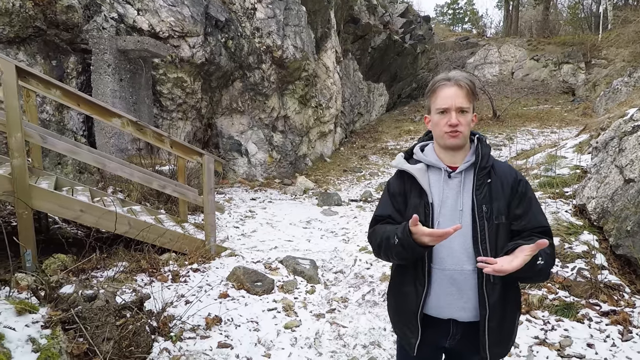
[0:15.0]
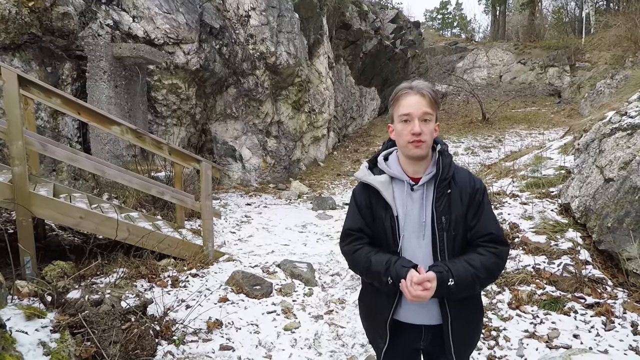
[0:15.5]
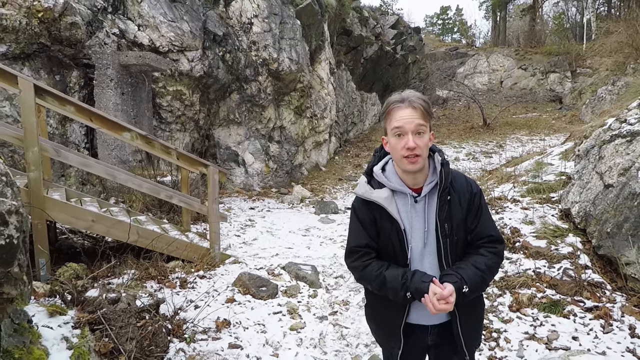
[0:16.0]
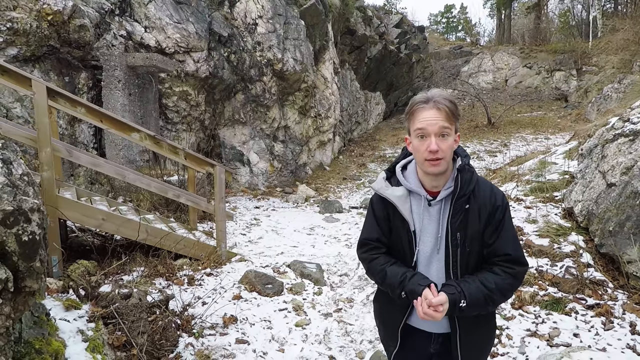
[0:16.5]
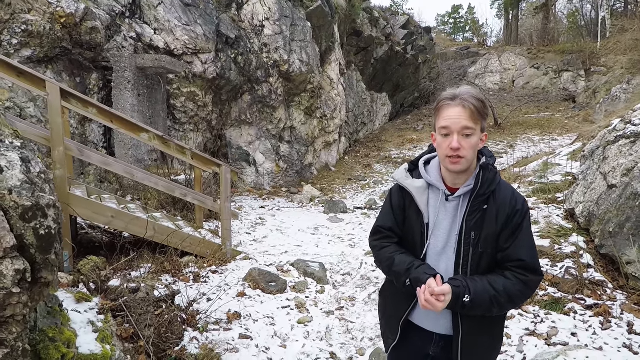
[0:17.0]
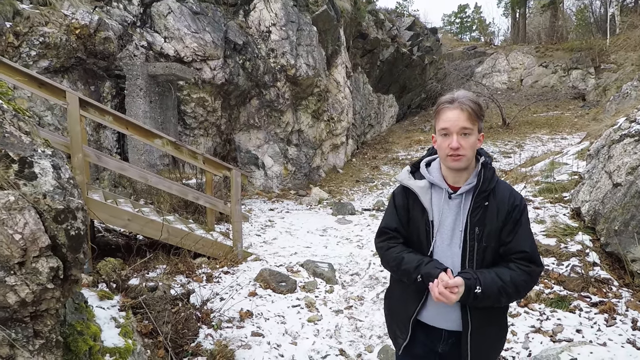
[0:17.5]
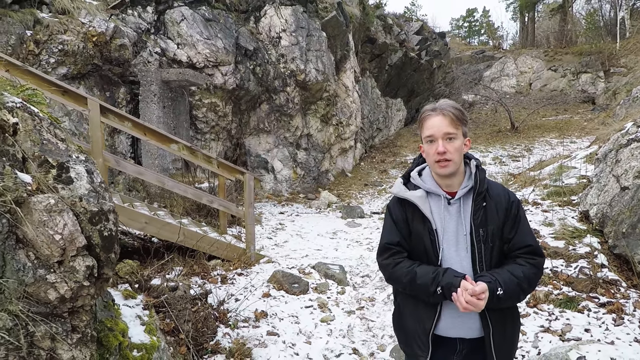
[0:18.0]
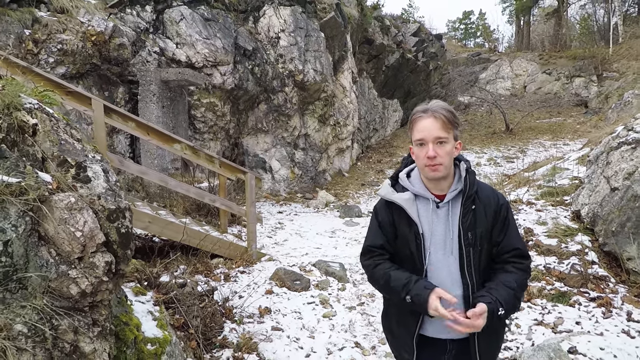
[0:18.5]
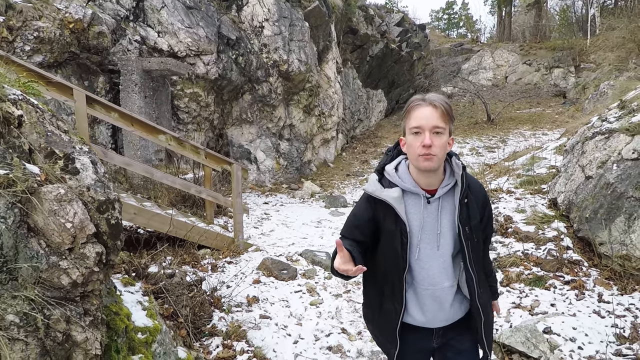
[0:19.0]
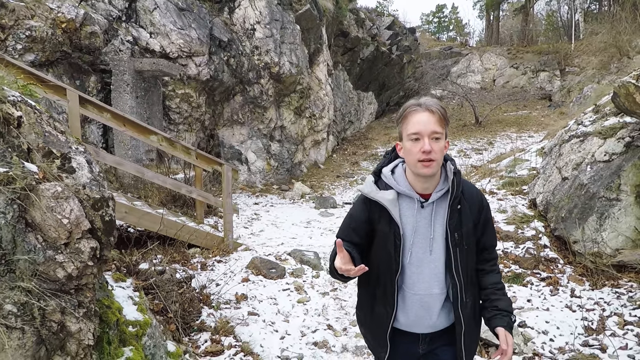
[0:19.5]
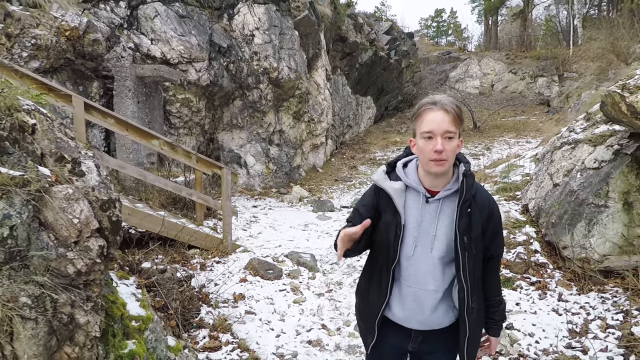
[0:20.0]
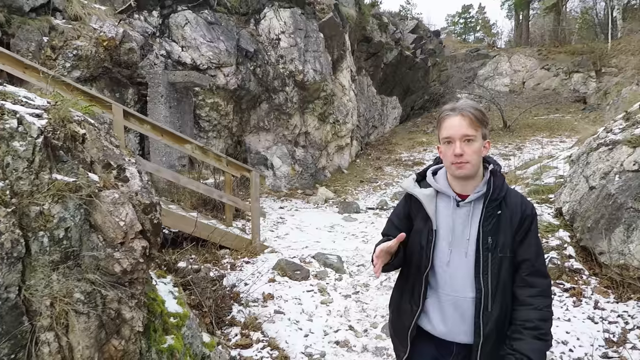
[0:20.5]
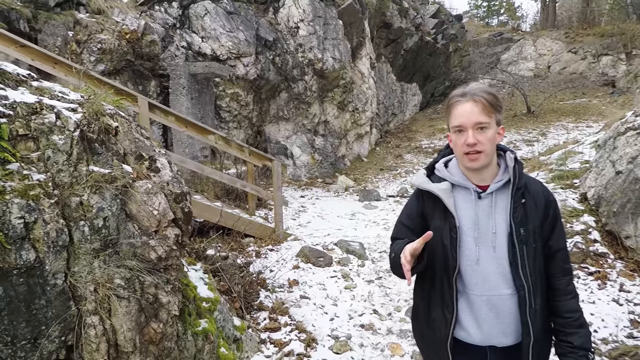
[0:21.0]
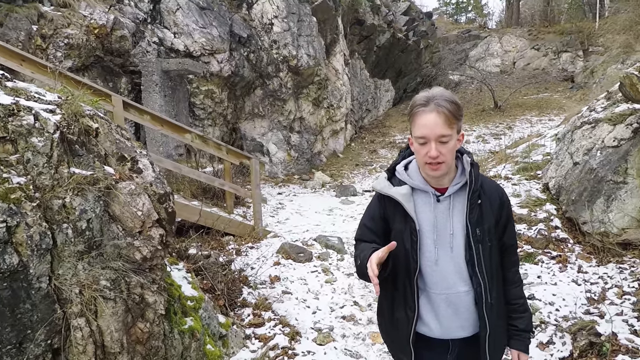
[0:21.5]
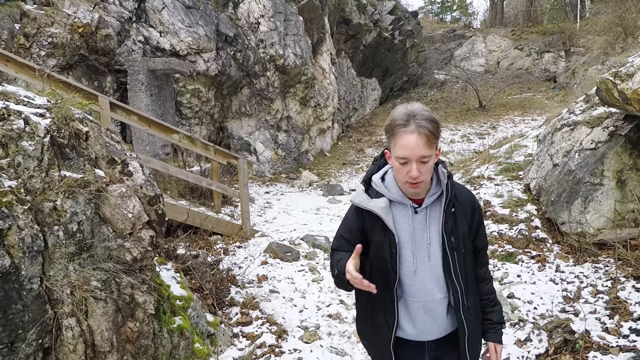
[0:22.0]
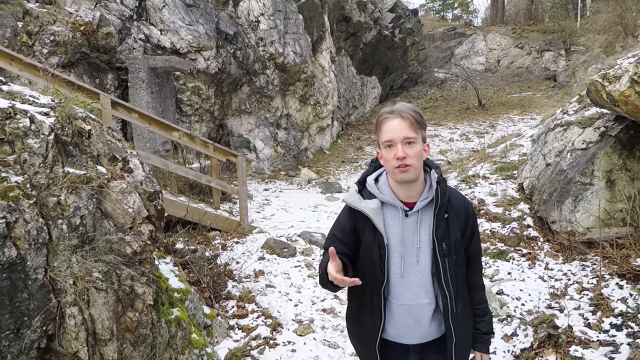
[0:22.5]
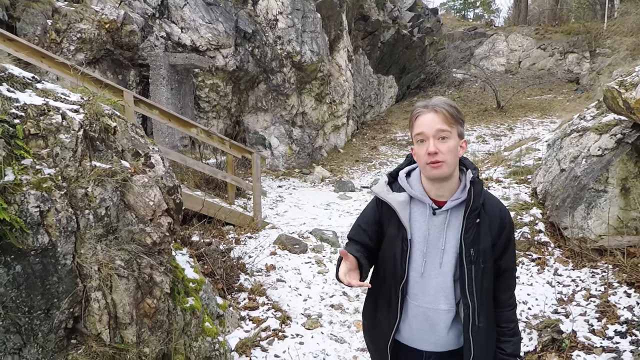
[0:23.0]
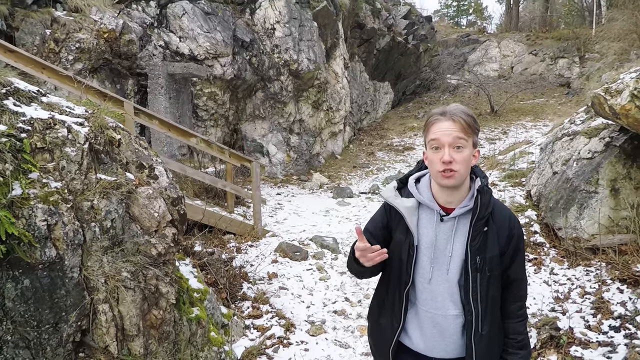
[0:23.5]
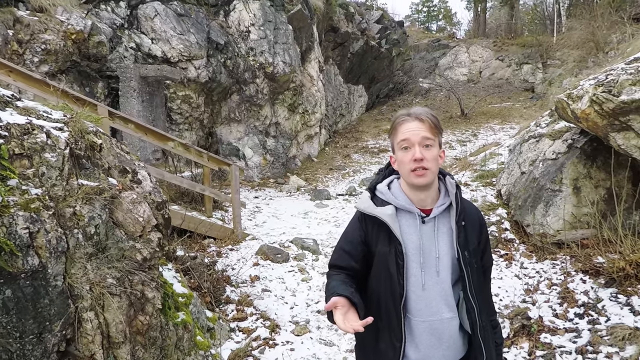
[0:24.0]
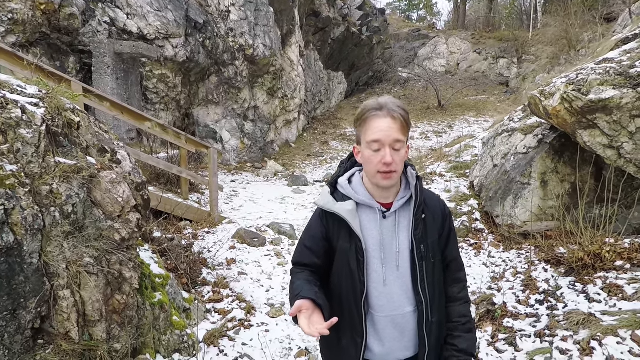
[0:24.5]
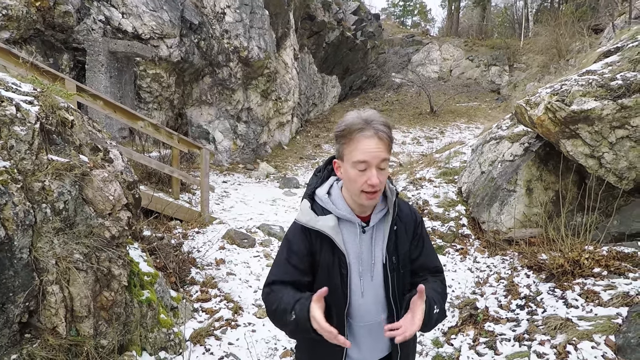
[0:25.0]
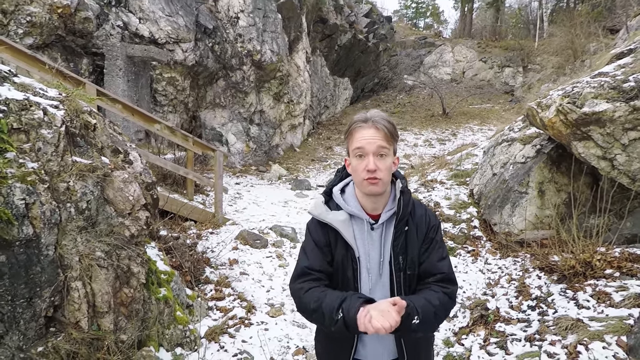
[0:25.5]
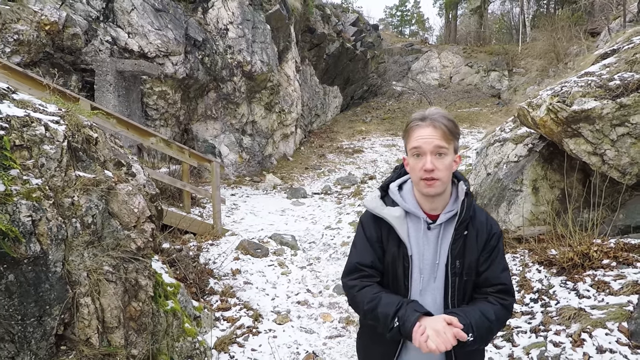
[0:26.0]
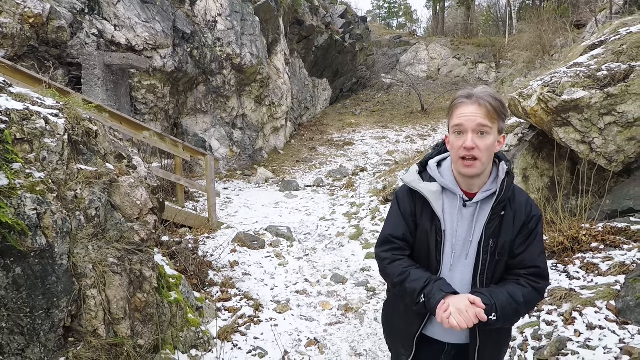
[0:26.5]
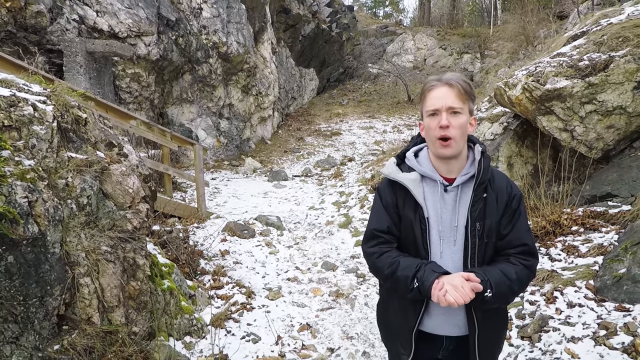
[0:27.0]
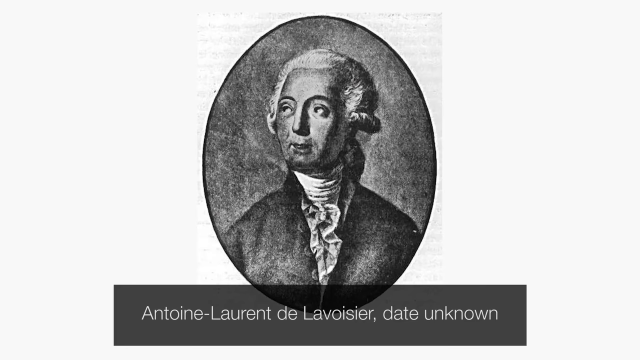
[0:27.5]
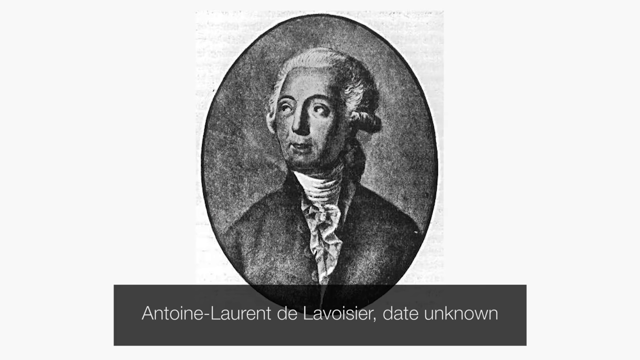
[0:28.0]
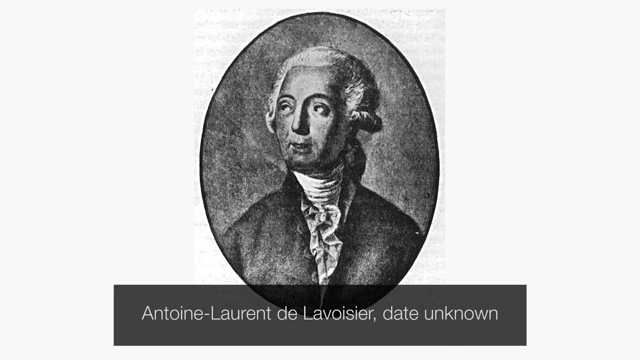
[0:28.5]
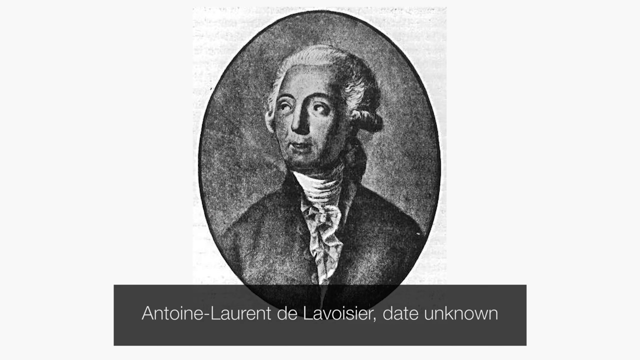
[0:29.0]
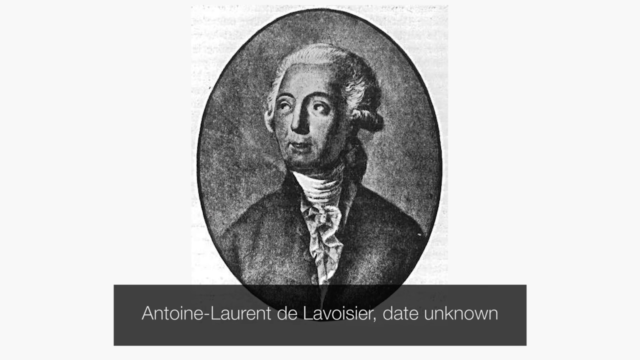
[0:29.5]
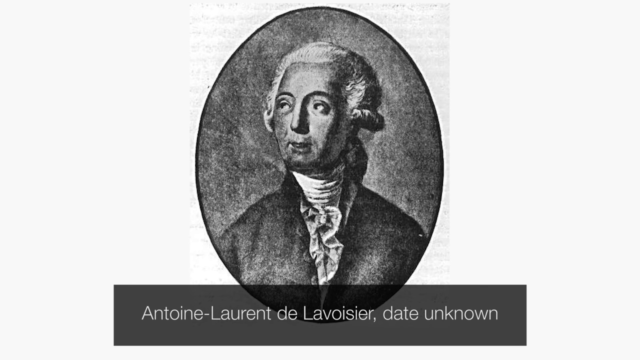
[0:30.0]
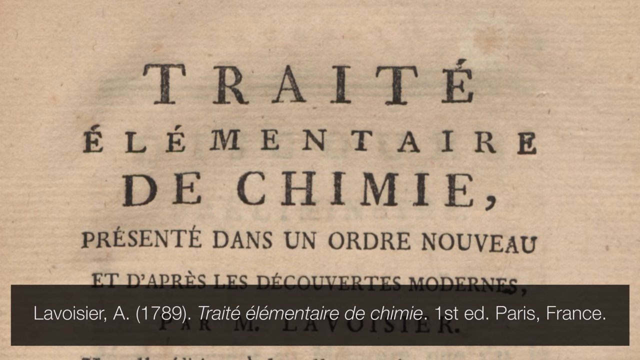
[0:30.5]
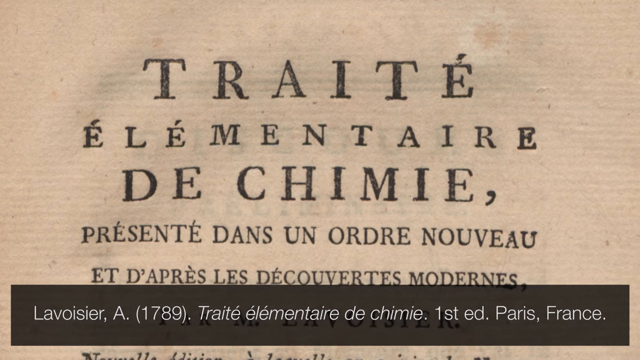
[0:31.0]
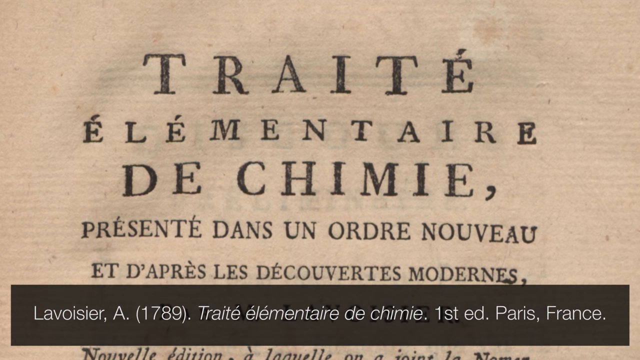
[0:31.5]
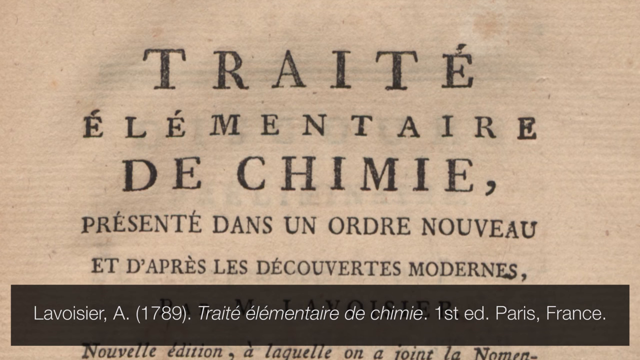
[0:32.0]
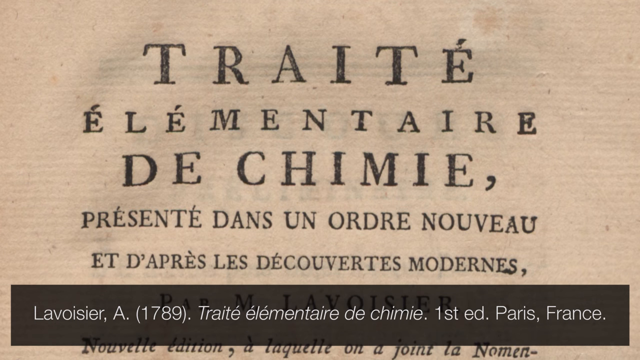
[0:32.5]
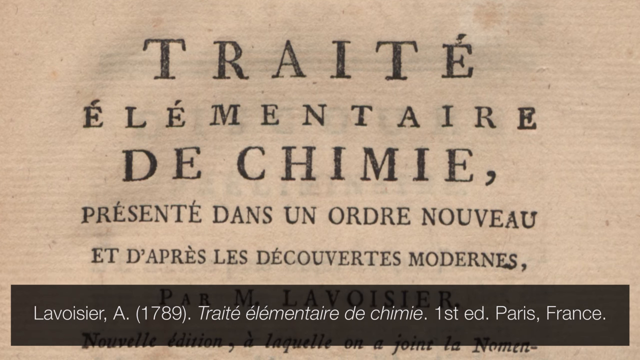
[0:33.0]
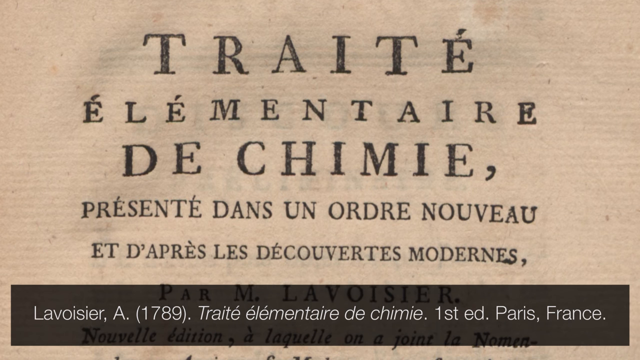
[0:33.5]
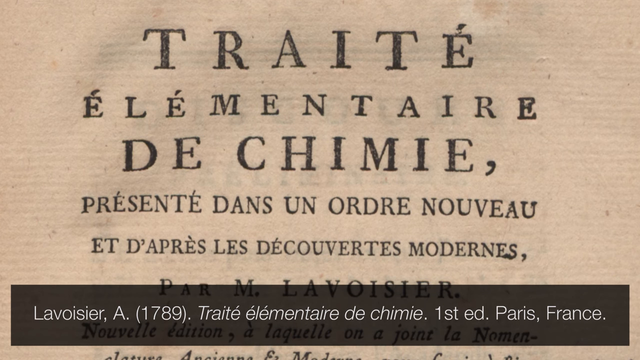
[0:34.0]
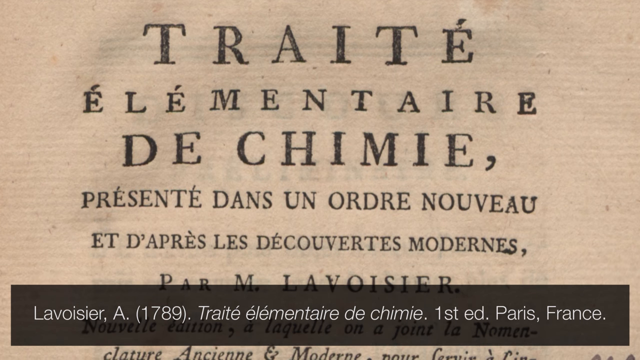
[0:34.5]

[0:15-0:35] A man wearing a hoodie jacket with a hoodie sweatshirt underneath gestures with his hands as he talks. A document on ancient-looking paper appears, apparently a historical document; it seems to mention a treaty and reads "Traité Elementaire de Chimie". The writing looks French and is only glimpsed briefly; it appears to mention something about a new order and a covenant. The date on the document is 1789. The setting looks like a forest, possibly in France.